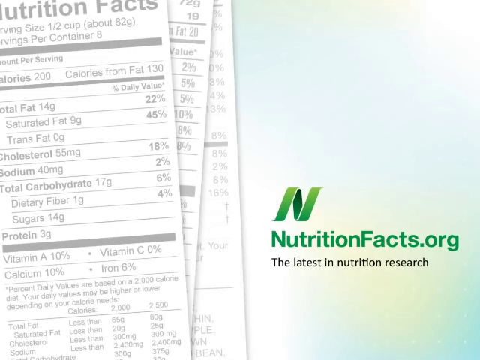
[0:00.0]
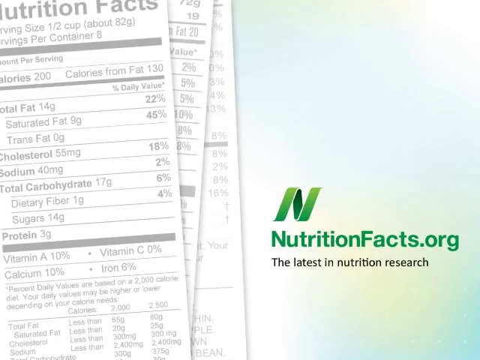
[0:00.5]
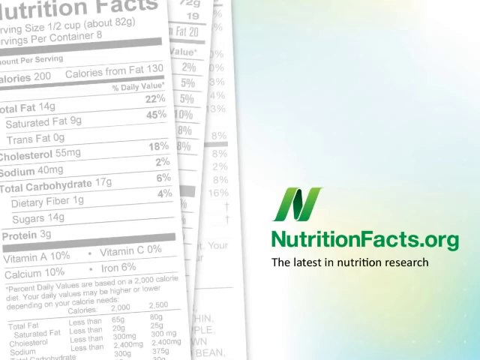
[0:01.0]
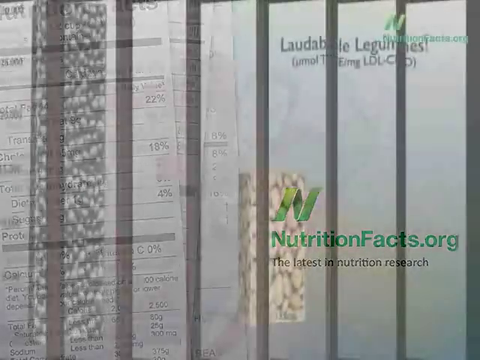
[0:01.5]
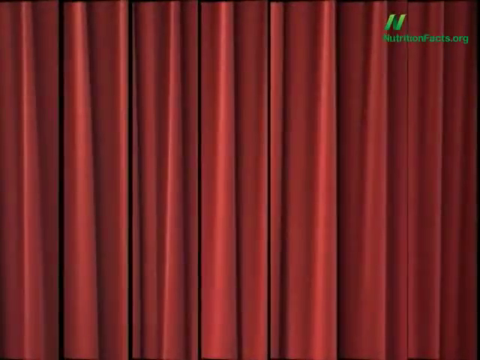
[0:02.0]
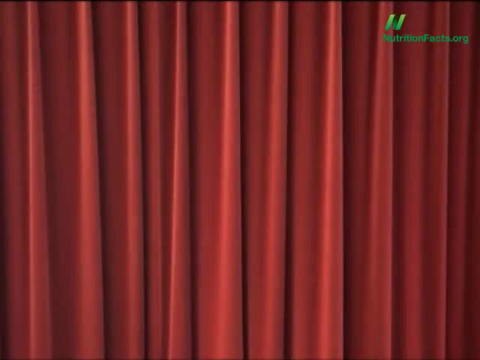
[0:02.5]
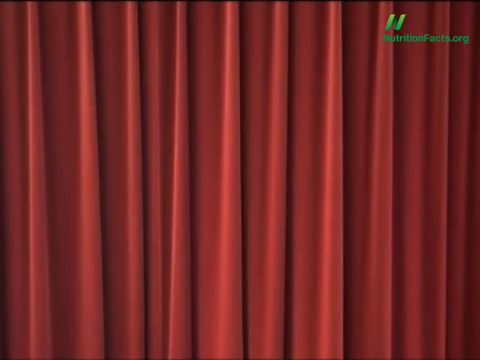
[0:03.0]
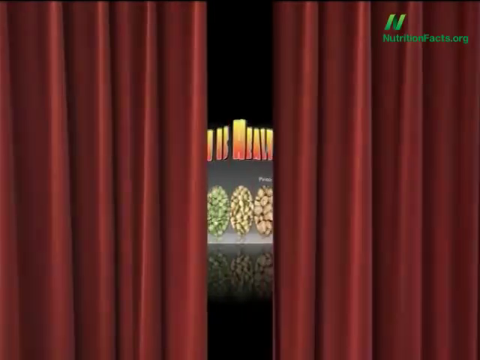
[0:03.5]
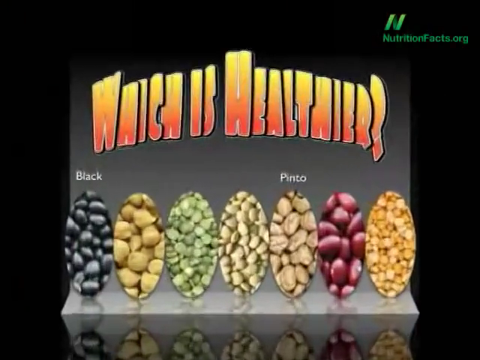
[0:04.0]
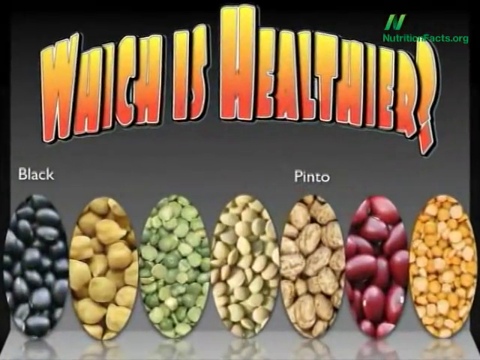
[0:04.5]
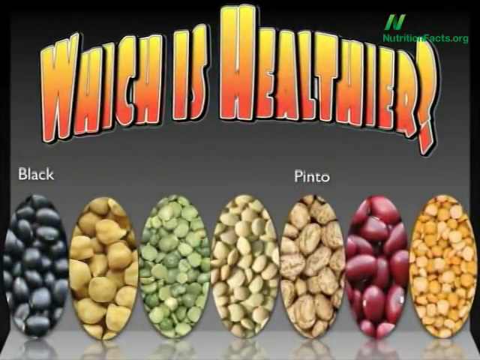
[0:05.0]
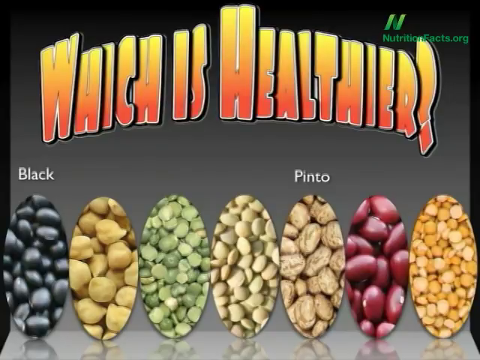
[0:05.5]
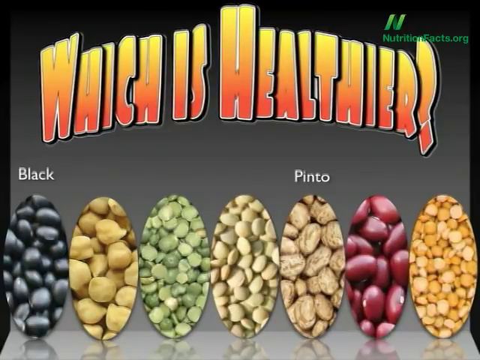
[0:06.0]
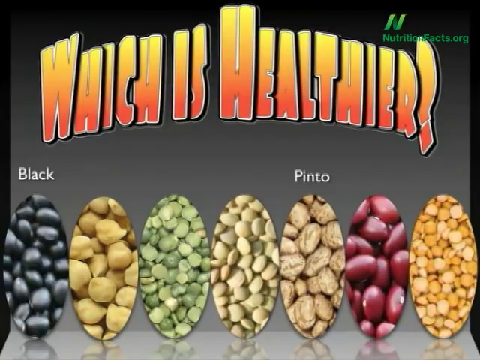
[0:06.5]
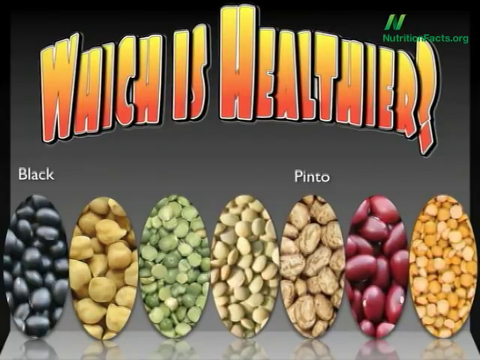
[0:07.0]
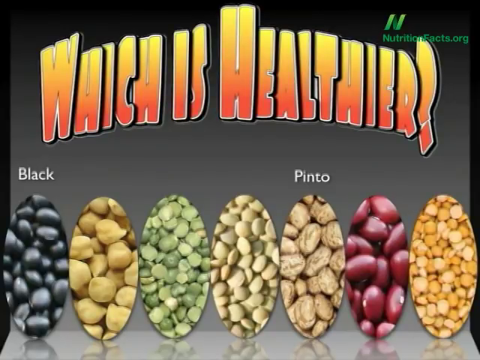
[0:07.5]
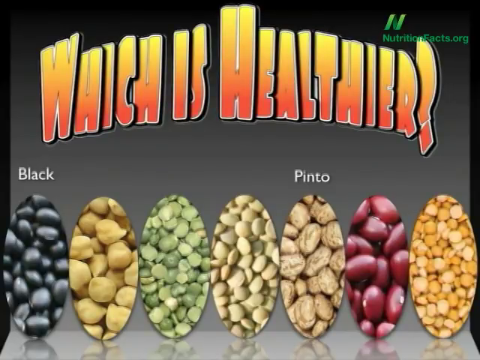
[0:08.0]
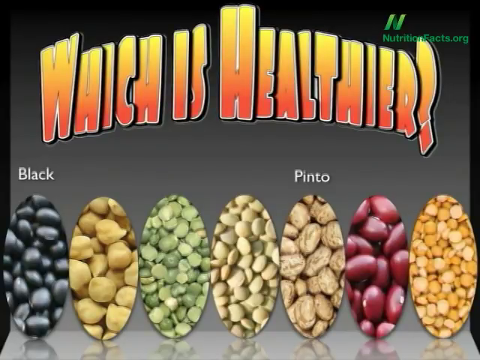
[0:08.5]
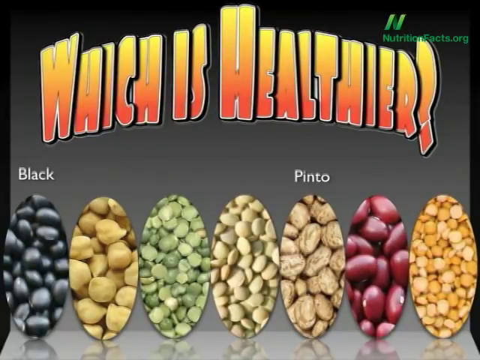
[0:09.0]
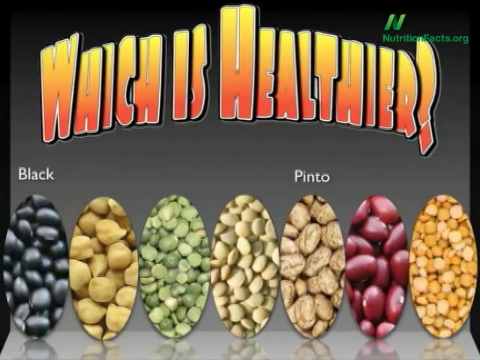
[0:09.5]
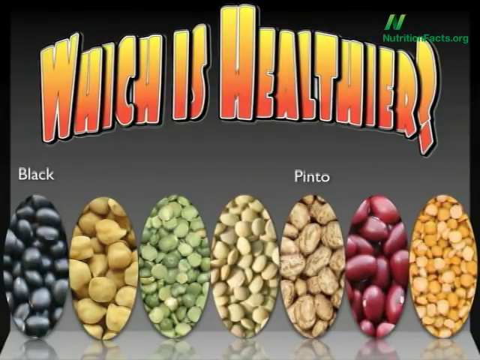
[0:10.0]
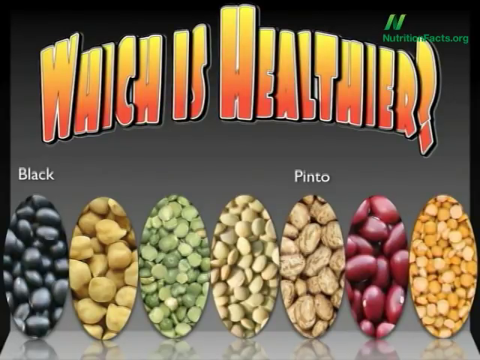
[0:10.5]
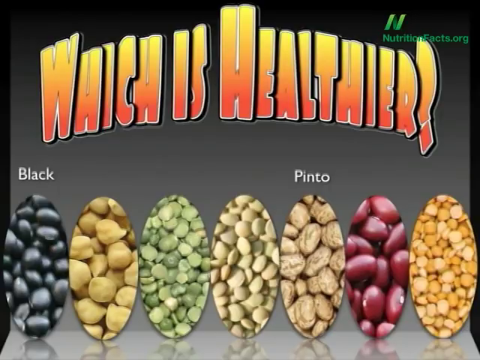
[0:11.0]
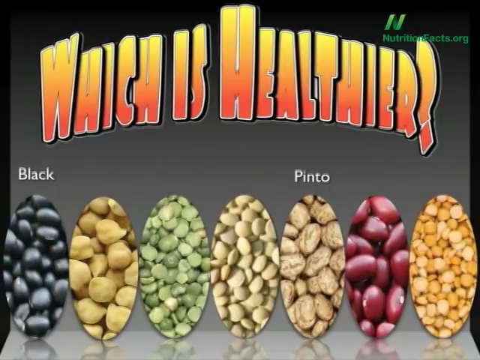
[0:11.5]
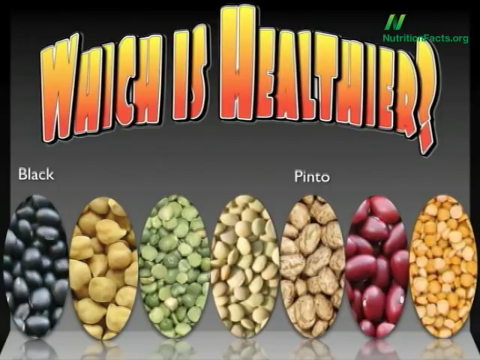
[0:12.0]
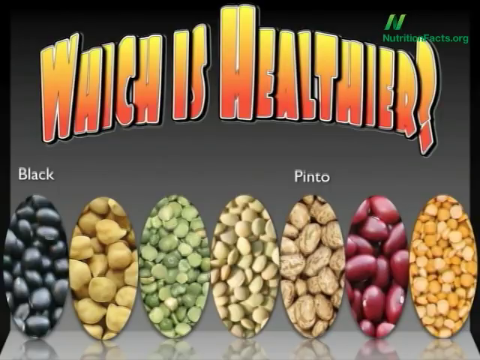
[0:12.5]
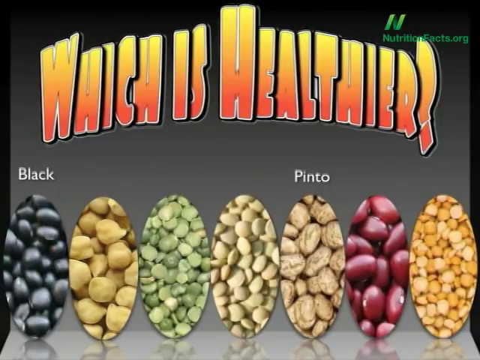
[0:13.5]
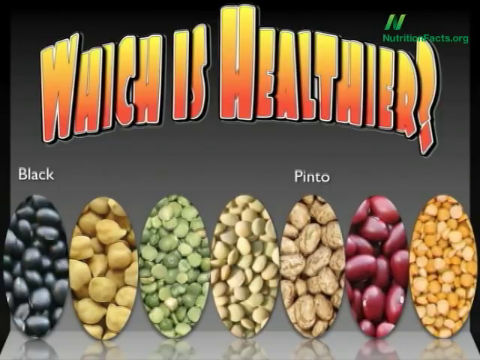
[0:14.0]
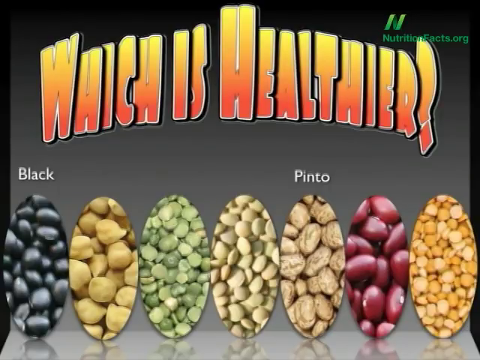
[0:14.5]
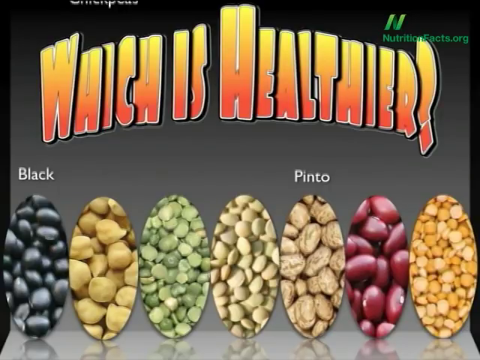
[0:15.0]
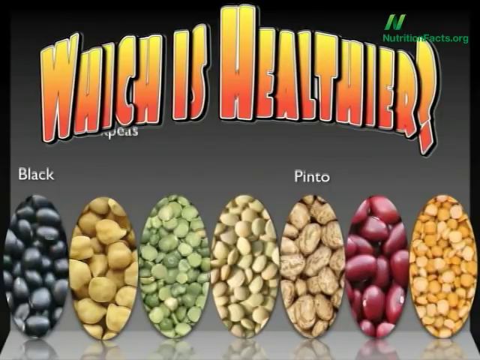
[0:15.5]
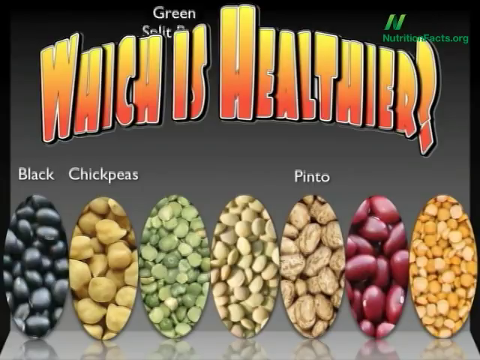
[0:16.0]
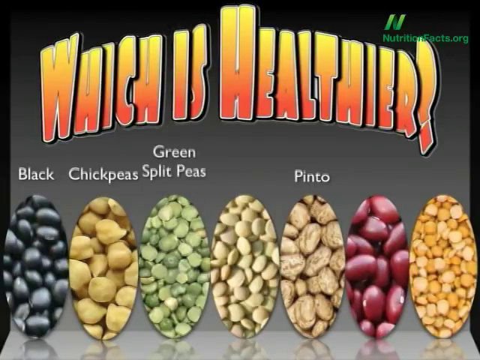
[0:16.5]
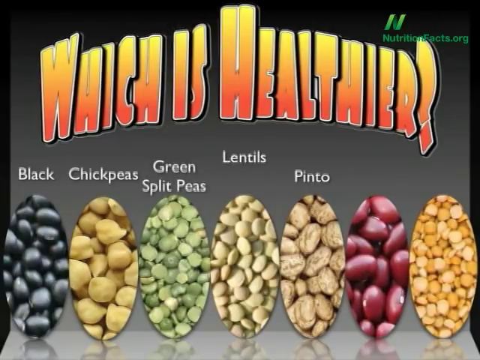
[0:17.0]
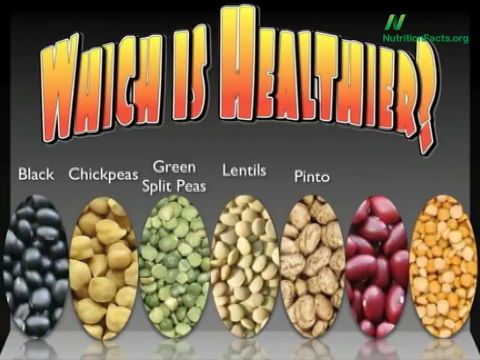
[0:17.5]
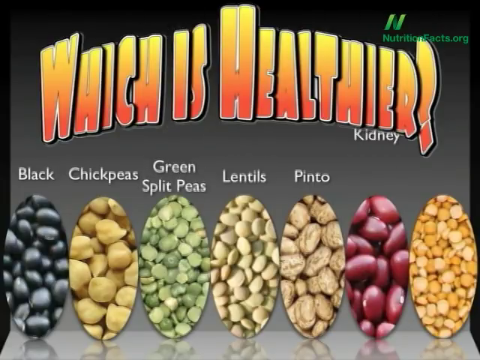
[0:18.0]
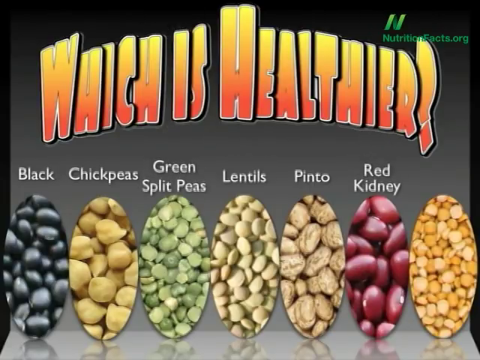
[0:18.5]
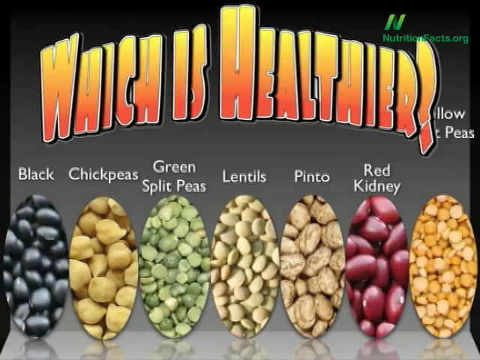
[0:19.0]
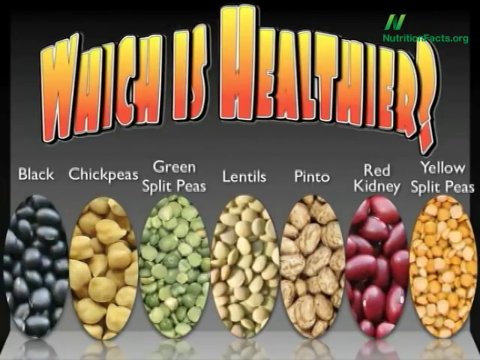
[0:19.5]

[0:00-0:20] The video is from nutritionfacts.org. It opens with the organization's logo on the top right side of the screen and a stack of three sheets of paper displaying nutrition facts, with text such as "Fat", "Carbohydrate" and "Protein". It then cuts to a red-brownish background that looks like a curtain, with the NutritionFacts.org logo in the top right corner. Next comes a screen with the text "Which is Healthier". It immediately shows what looks like seven types of beans, one labeled "Black" and another "Pinto". Five additional labels then drop from the top of the screen: chickpeas, green split peas, lentils, red kidney and yellow split peas. No further detail appears beyond the names of the bean types on display. The beans all have different textures and can be physically distinguished.